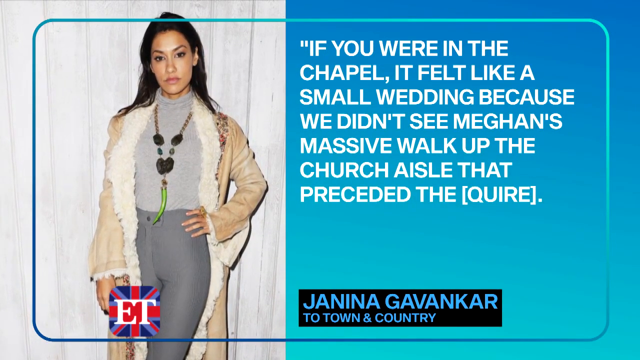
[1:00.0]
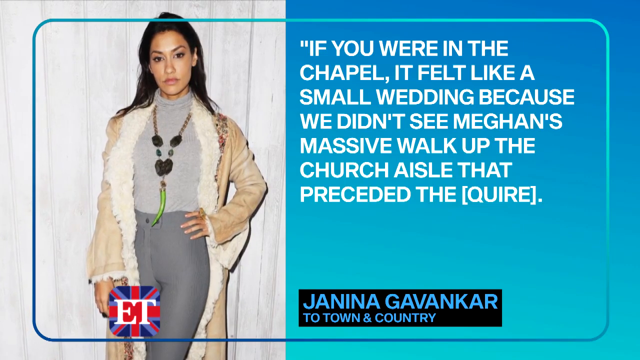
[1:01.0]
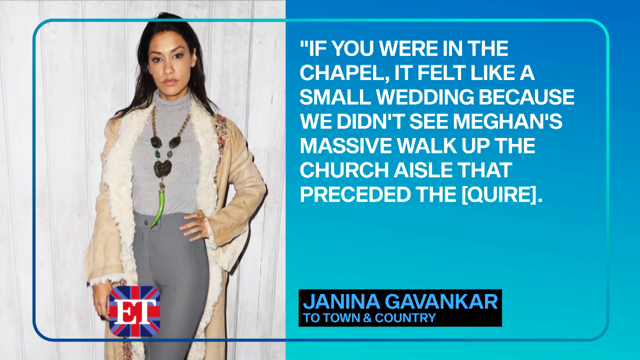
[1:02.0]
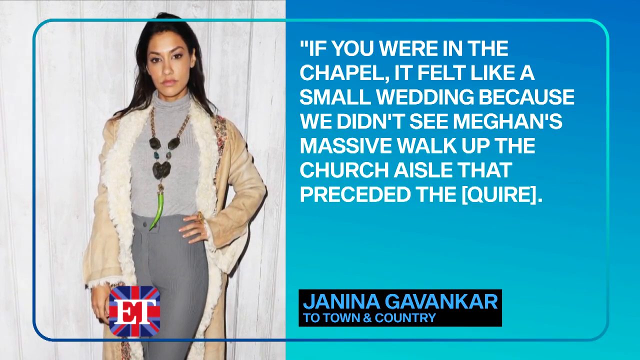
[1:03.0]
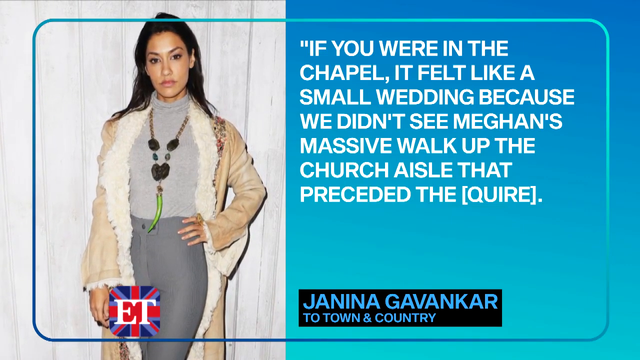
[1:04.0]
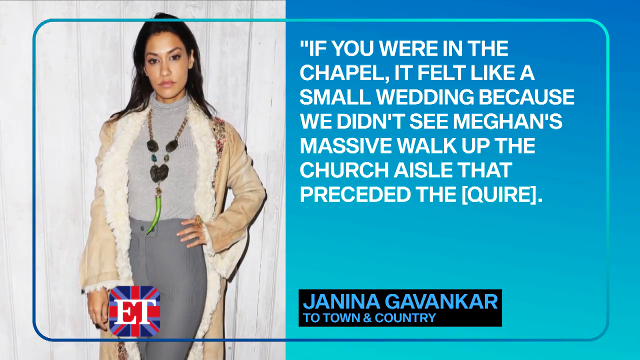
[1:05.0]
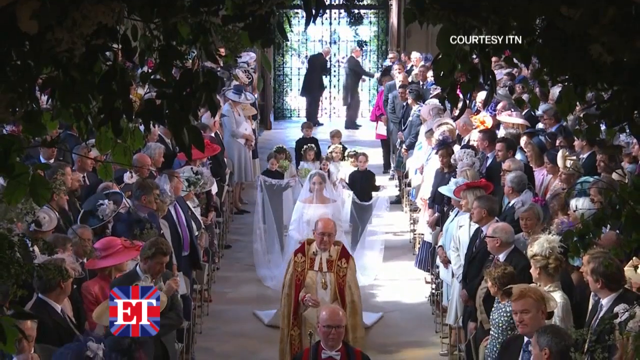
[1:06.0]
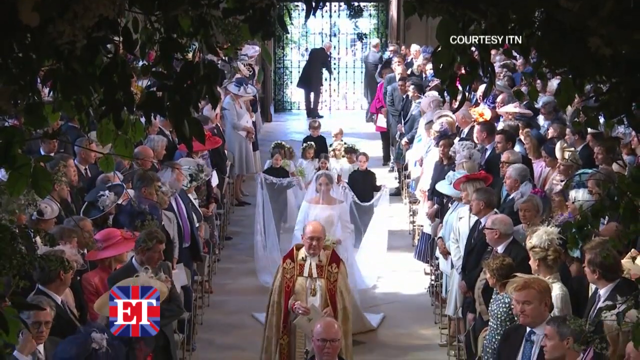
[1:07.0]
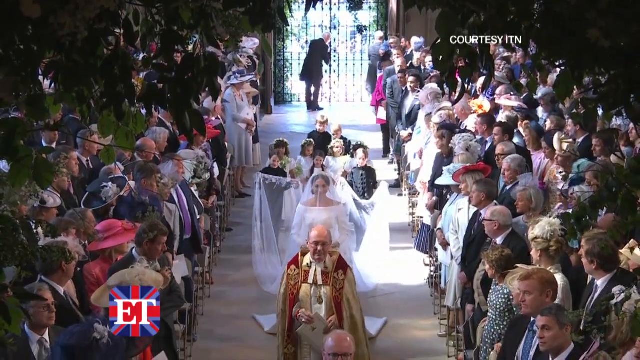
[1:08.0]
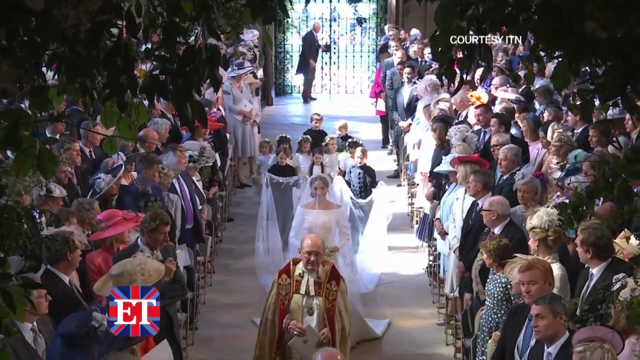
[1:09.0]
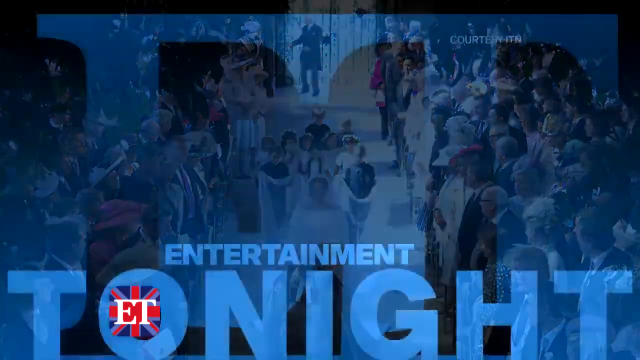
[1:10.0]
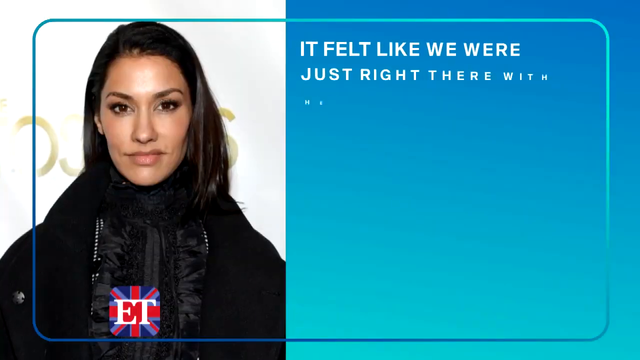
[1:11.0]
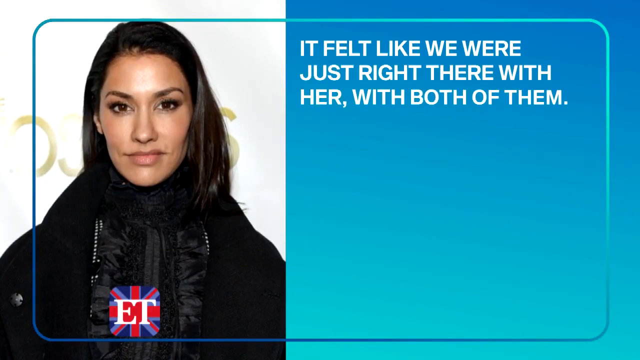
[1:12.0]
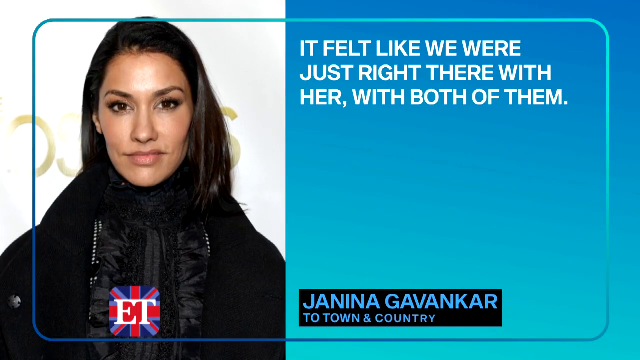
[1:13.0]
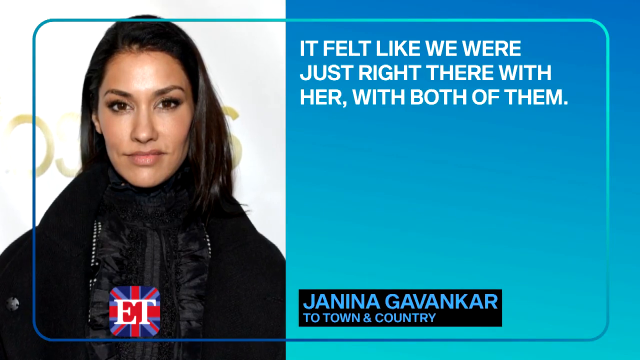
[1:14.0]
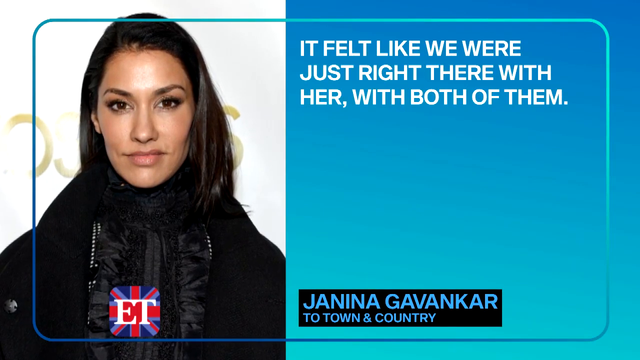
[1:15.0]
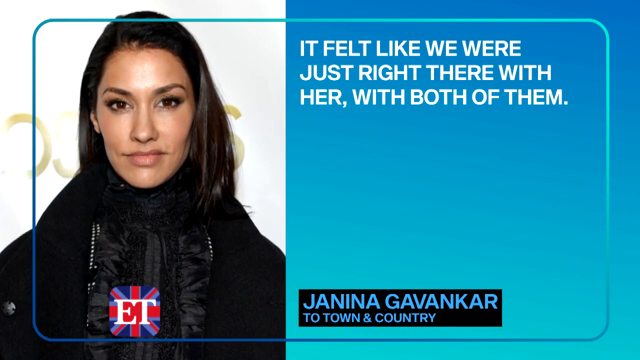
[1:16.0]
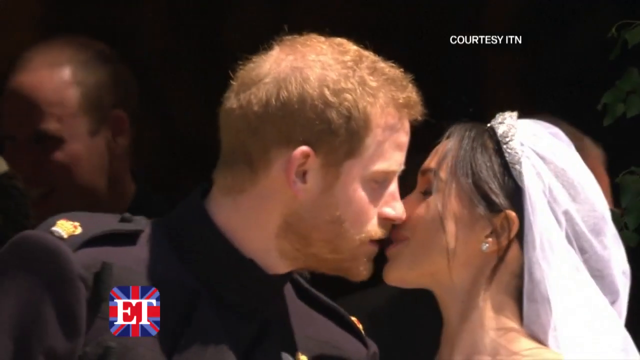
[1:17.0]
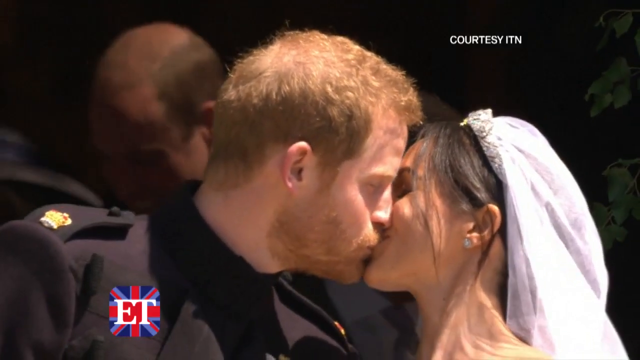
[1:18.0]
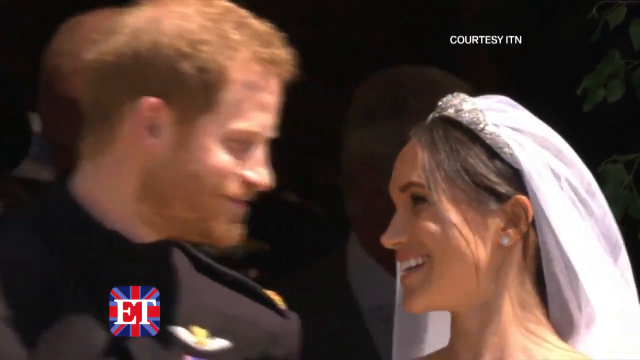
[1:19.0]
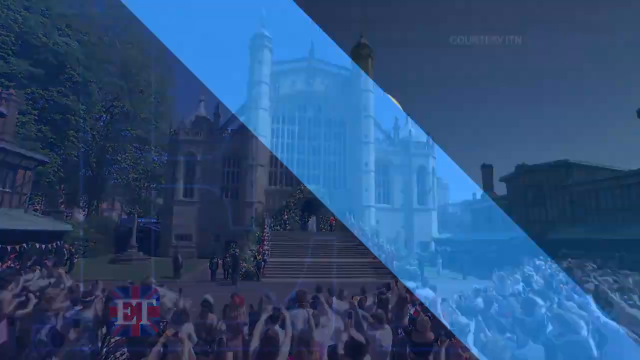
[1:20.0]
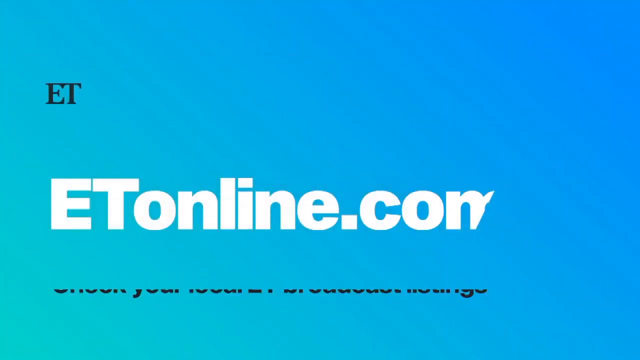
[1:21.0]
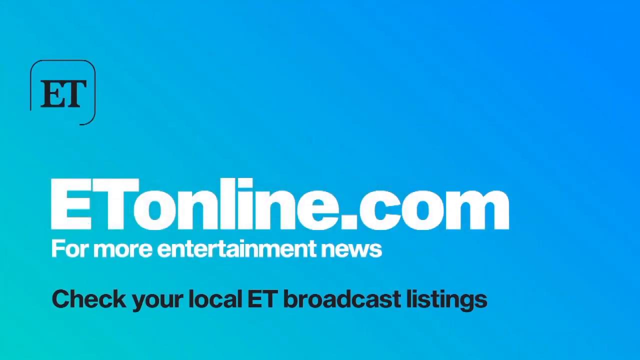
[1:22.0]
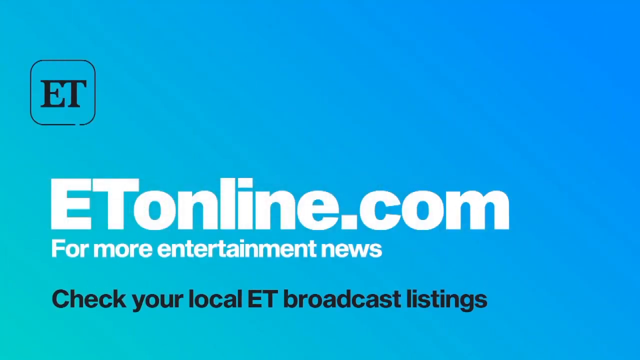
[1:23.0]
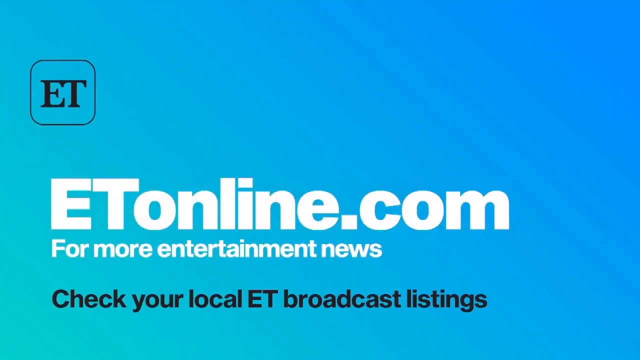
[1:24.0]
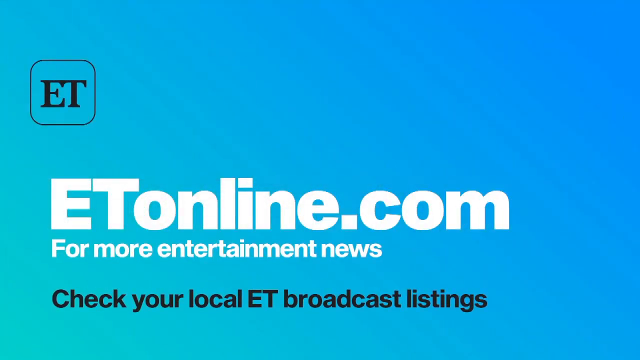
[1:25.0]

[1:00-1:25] An image of a lady appears with writing next to it that reads "it was like a small". The royal family then enters the chapel. An image of the lady smiling appears with the words "it felt like we were just right there with both of them", attributed to Janina. His face is shown smiling, and later the bride and groom kiss, looking very happy. Text credits etonline.com and reads "for more entertainment", and an ET label is boxed in black. Their excited faces are shown as the wedding in the chapel takes place.